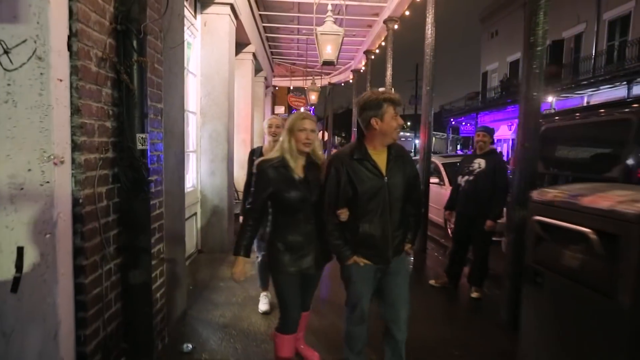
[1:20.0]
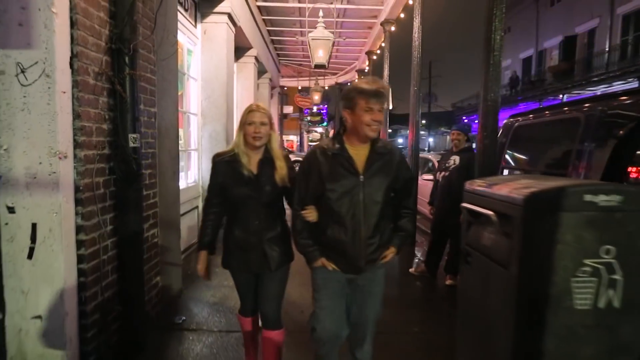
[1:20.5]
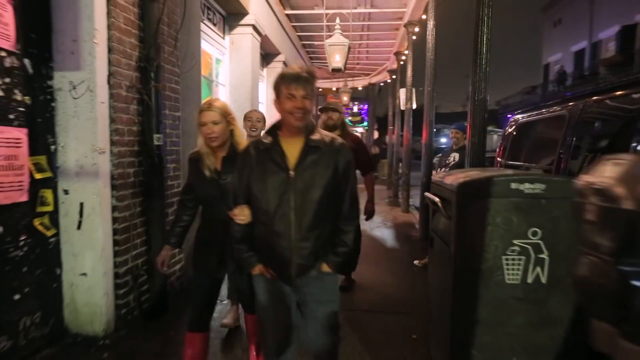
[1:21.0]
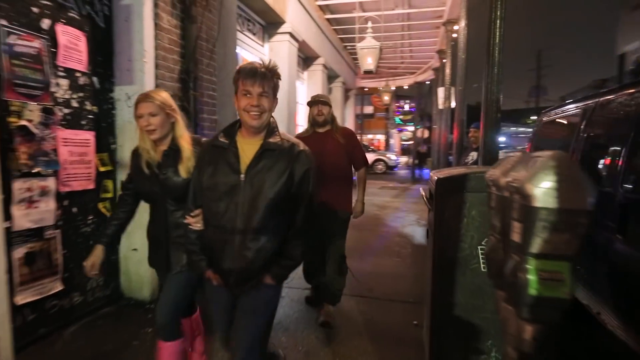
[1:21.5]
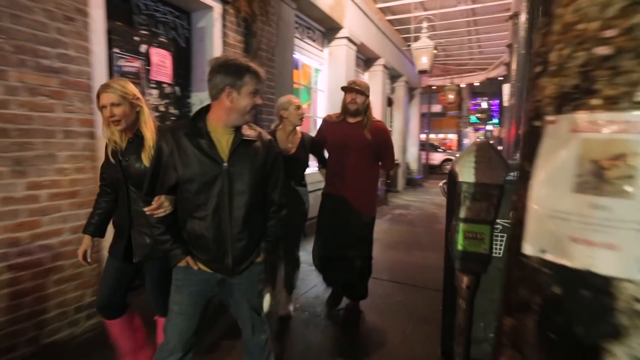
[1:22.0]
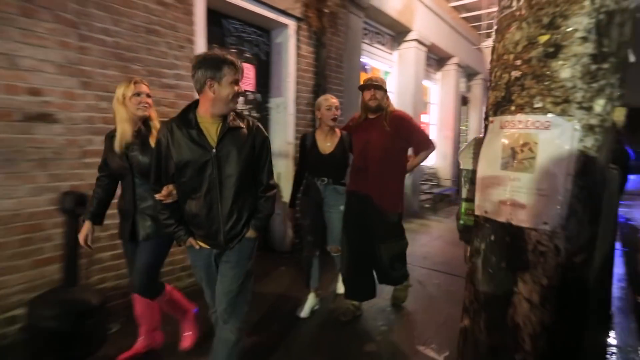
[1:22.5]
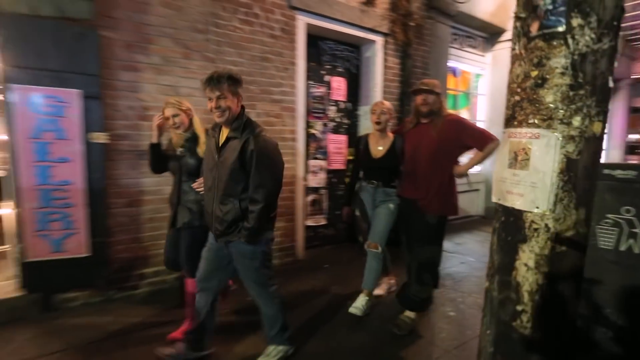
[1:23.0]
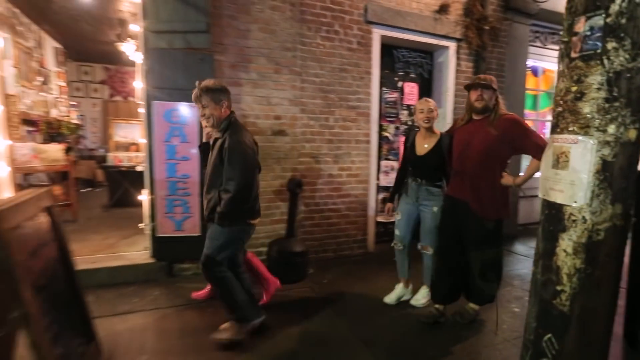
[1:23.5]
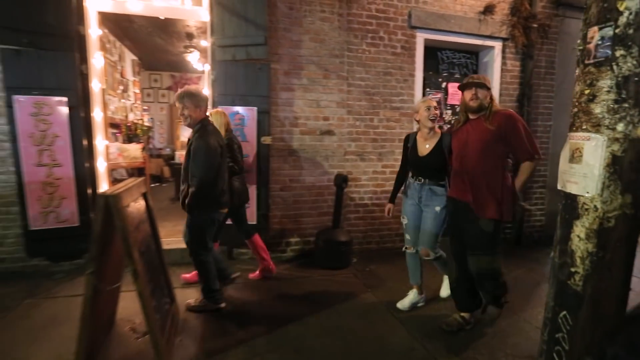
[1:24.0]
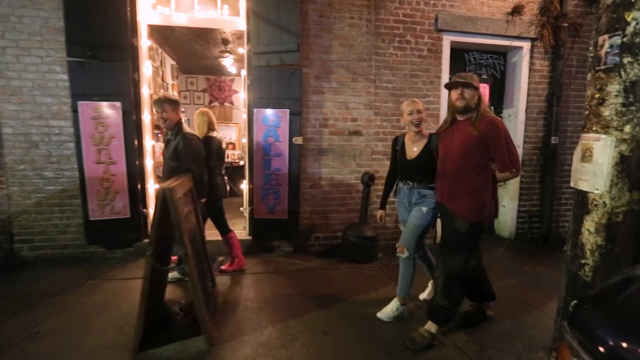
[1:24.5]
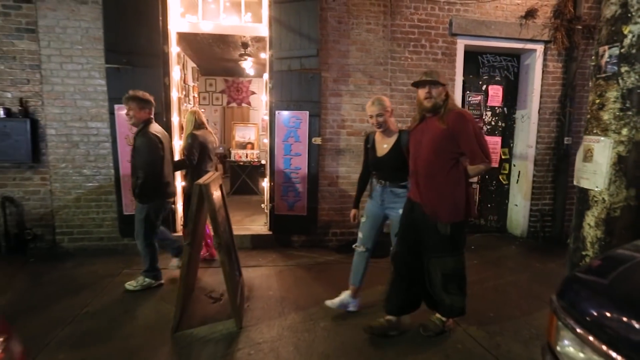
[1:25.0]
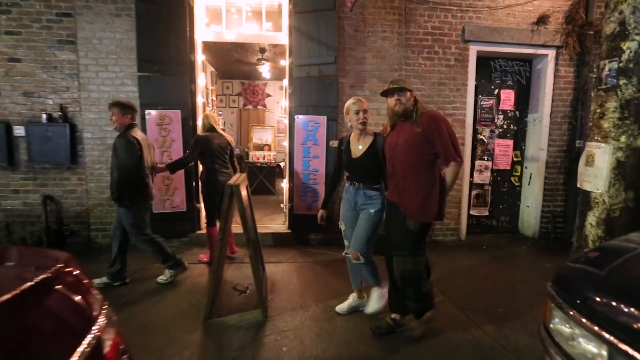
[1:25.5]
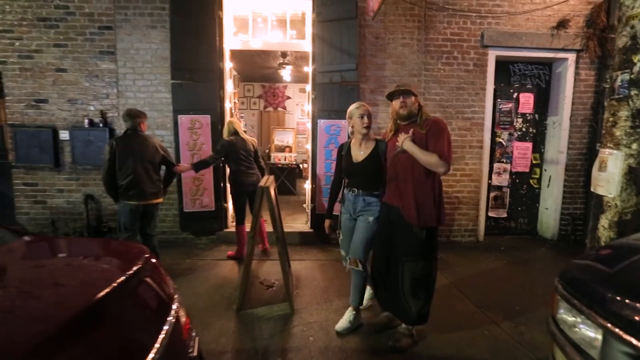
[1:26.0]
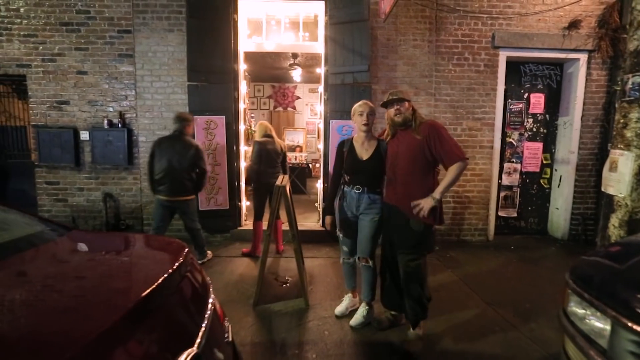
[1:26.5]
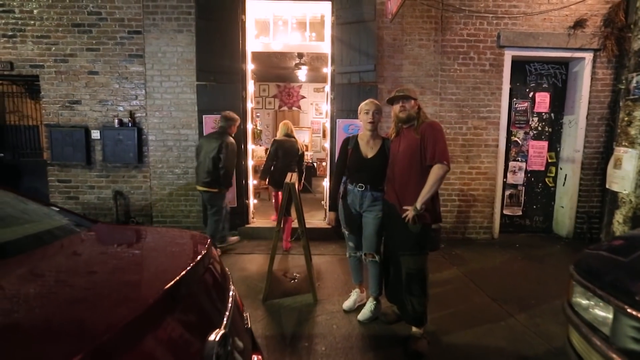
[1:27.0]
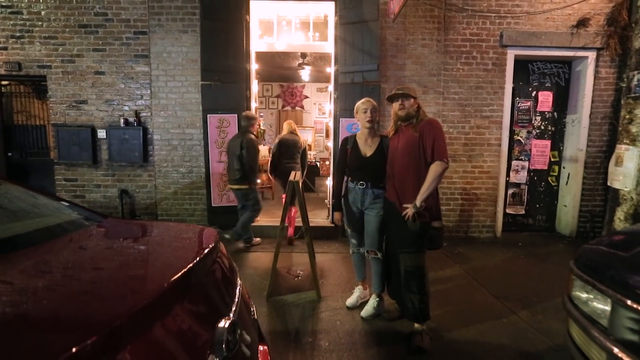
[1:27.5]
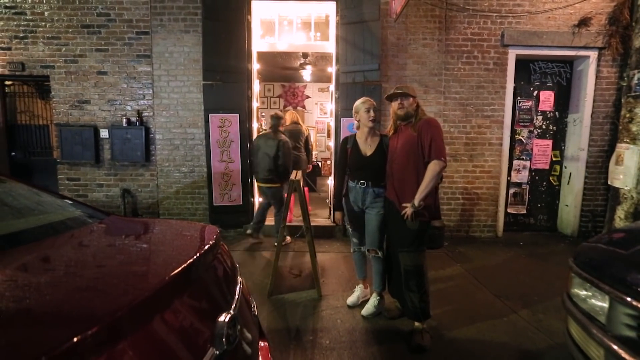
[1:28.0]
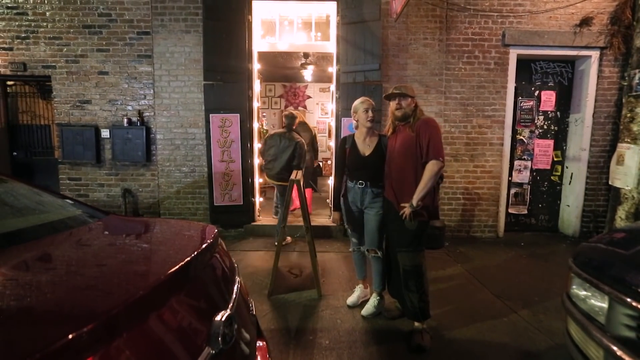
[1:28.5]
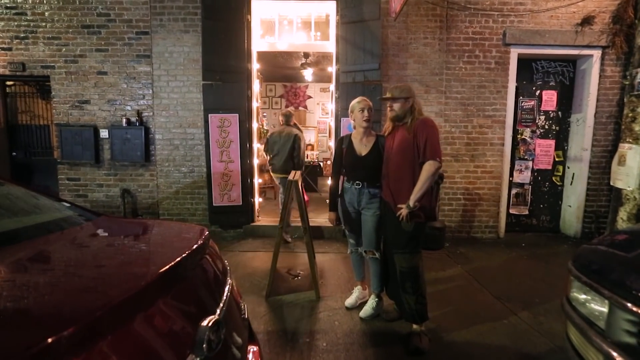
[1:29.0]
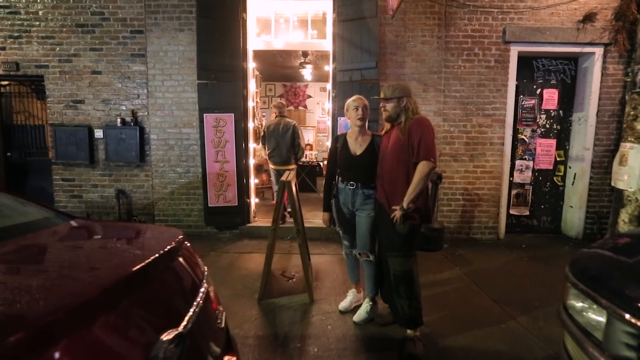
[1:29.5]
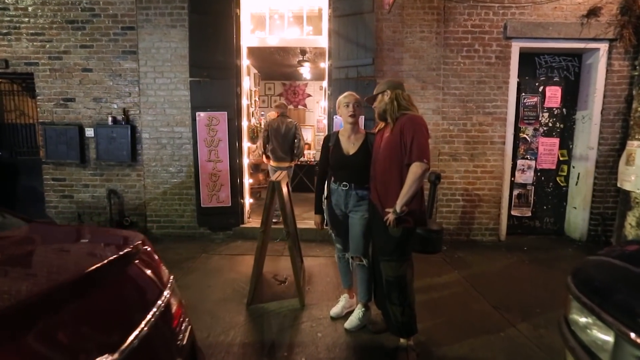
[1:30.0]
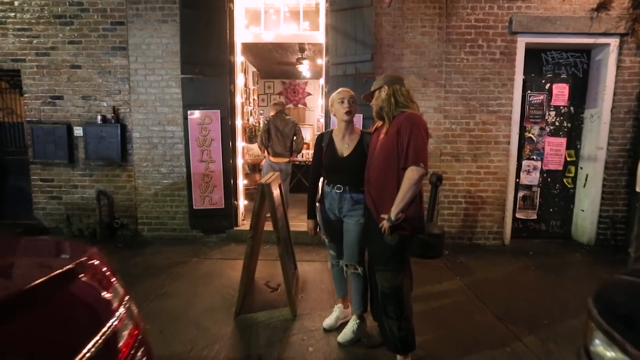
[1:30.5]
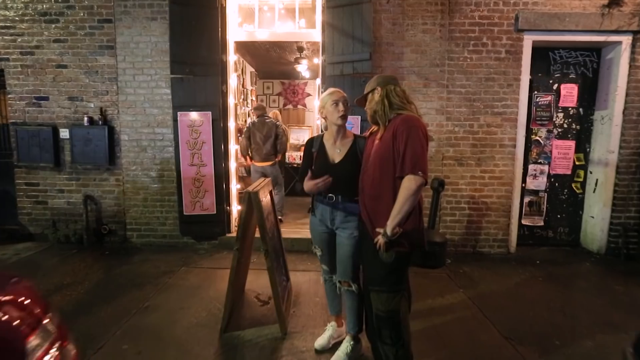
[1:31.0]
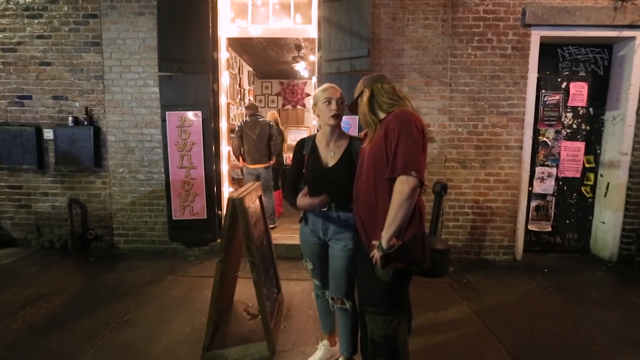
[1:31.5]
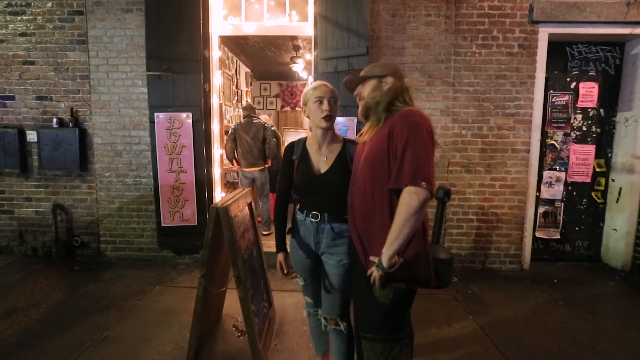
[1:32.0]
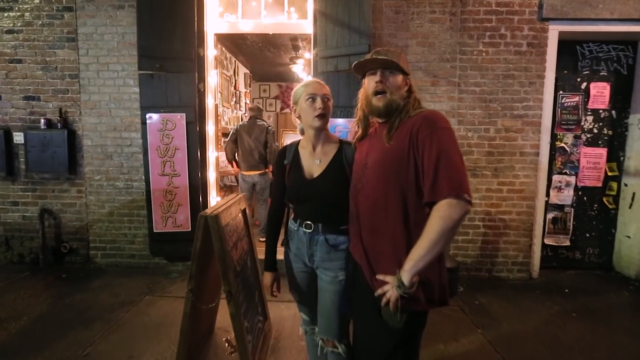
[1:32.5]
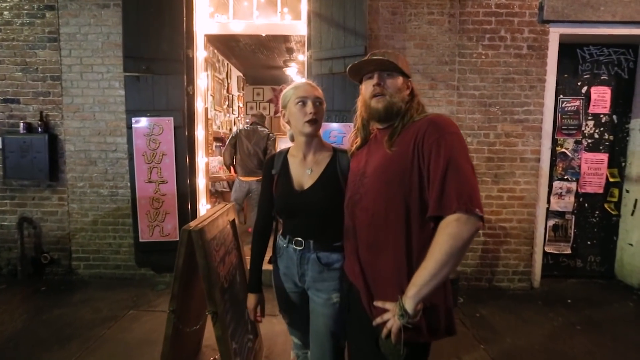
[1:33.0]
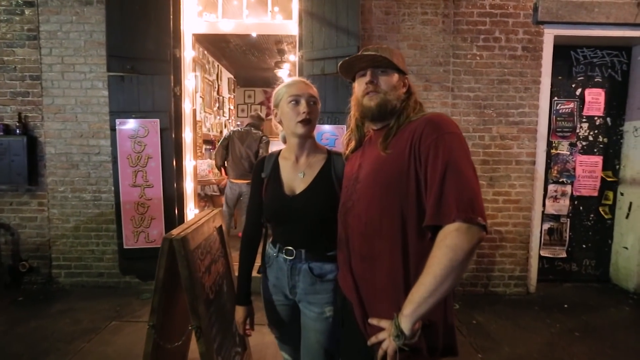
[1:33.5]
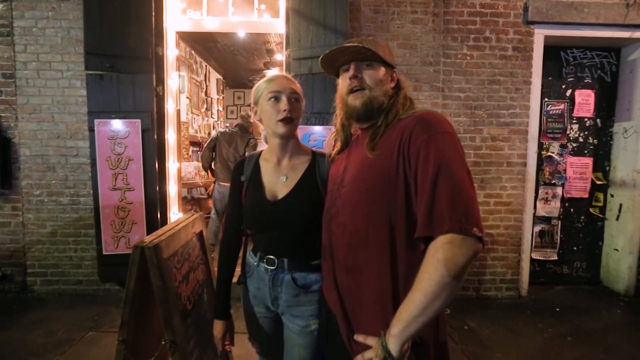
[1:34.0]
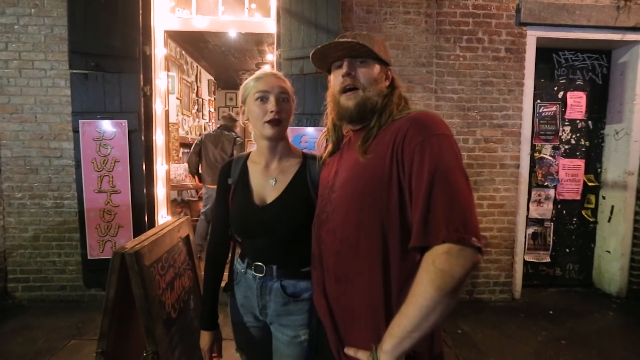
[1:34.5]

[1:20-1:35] Several people walk along a street. A woman dressed in black with long blonde hair walks with a man in a black leather jacket who has short brown hair. Behind them, a man in what appears to be a red shirt, wearing a baseball cap, with longer brown hair and a brown beard, walks with a woman in jeans and a long-sleeved black shirt, her blonde hair pulled back into a ponytail. Brick buildings with open stores are behind them. The first couple goes into a store, while the man in the red shirt and the woman in the long-sleeved black shirt stand and talk to the camera beside a pole with a missing poster on it. A red car is parked in front of the shop the other couple enters. An awning covers the sidewalk where they walk, and various posters and signs are affixed to the front of the door on one of the buildings behind them.